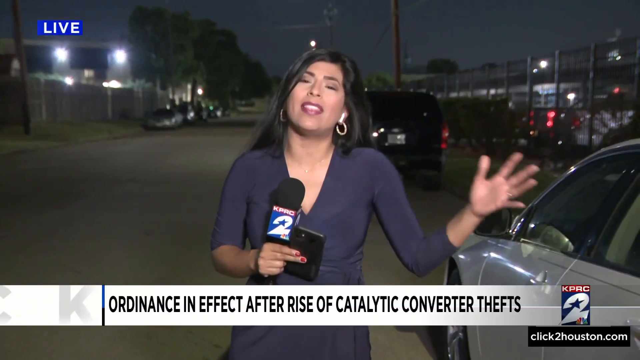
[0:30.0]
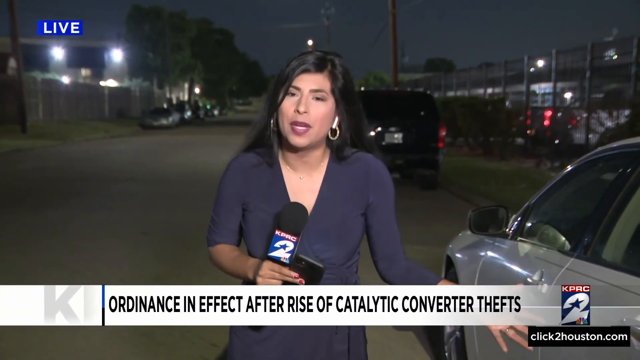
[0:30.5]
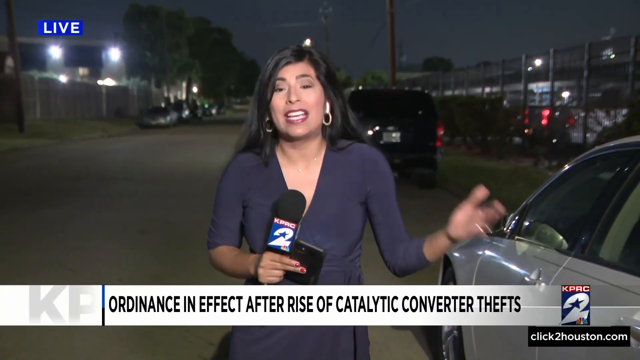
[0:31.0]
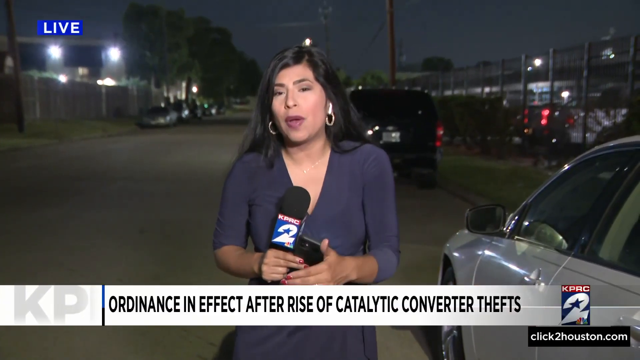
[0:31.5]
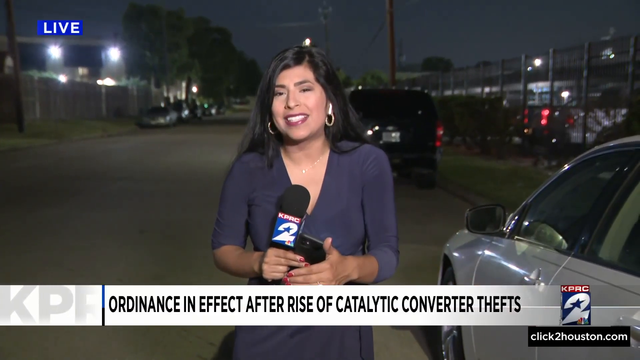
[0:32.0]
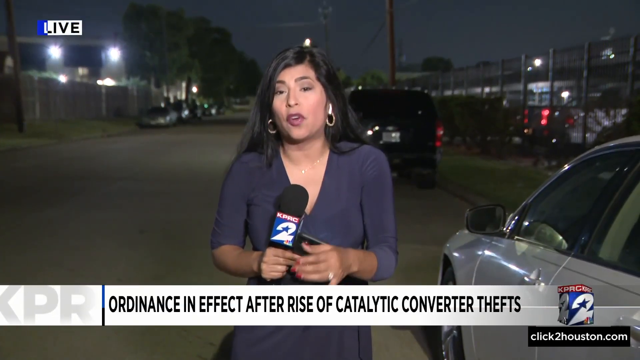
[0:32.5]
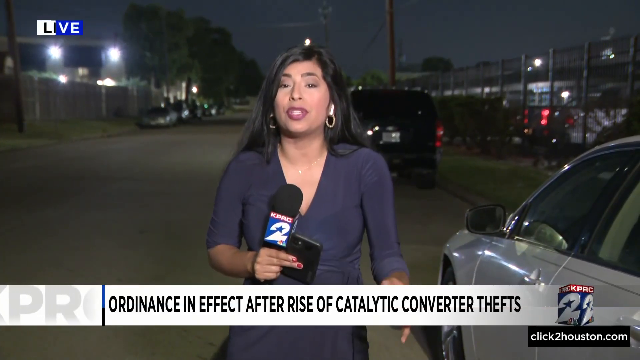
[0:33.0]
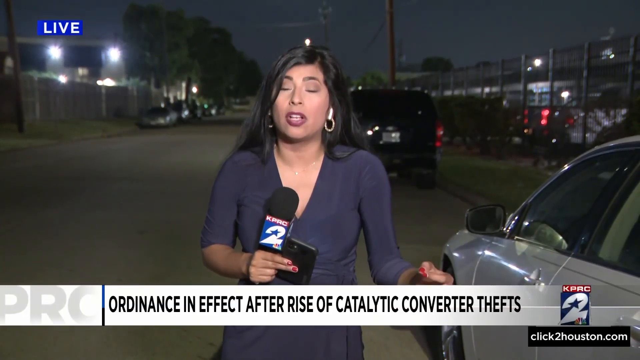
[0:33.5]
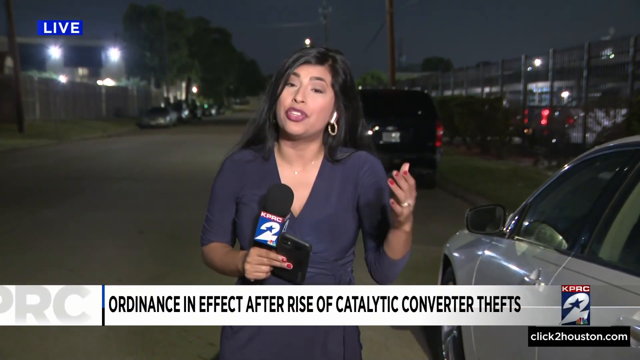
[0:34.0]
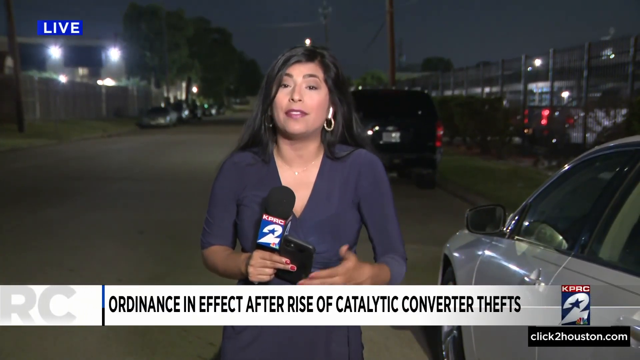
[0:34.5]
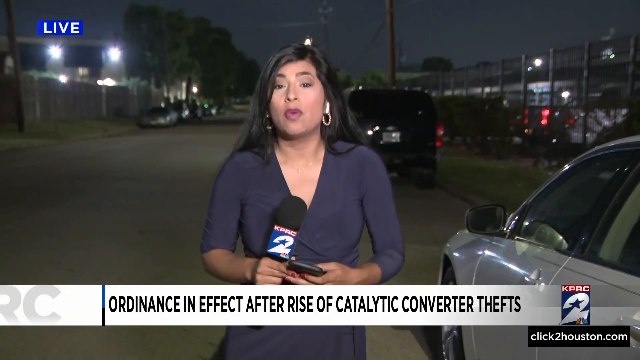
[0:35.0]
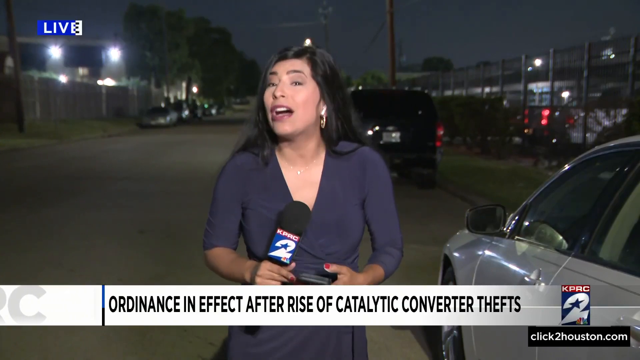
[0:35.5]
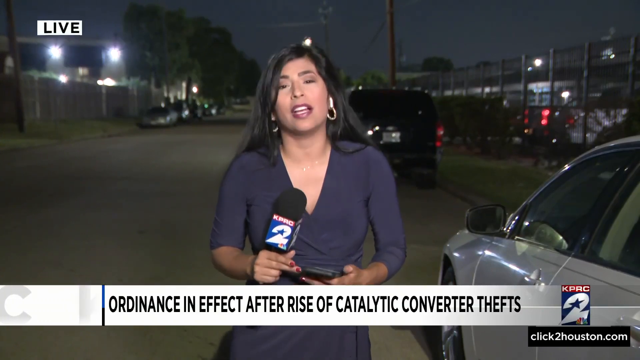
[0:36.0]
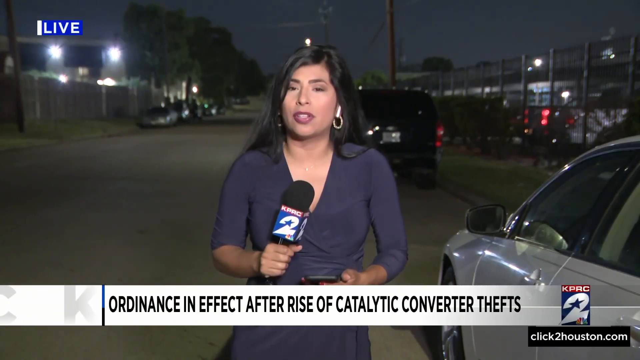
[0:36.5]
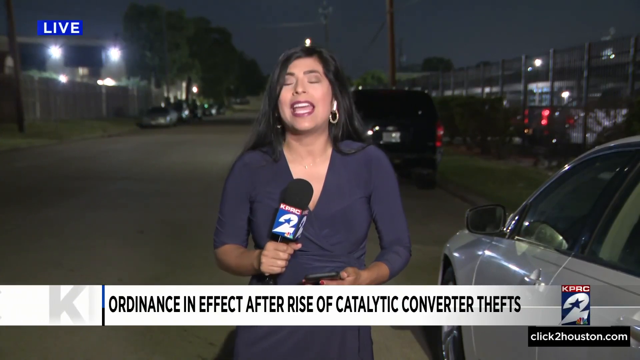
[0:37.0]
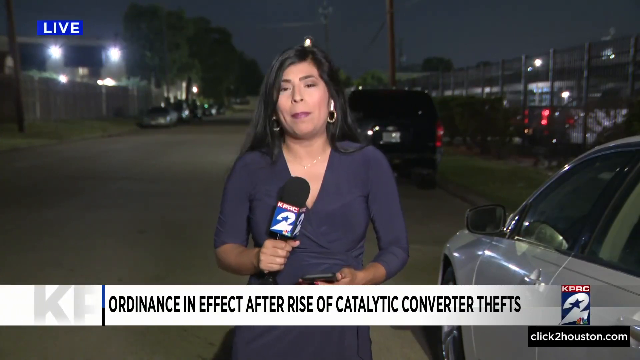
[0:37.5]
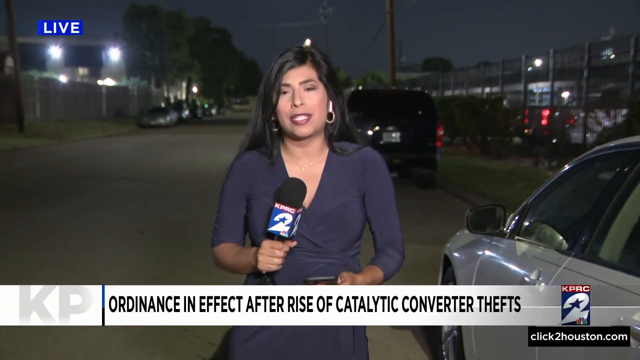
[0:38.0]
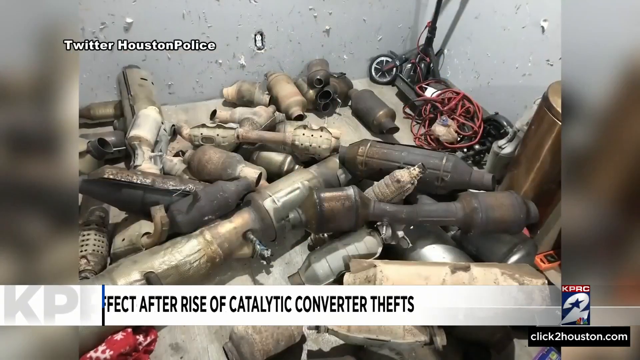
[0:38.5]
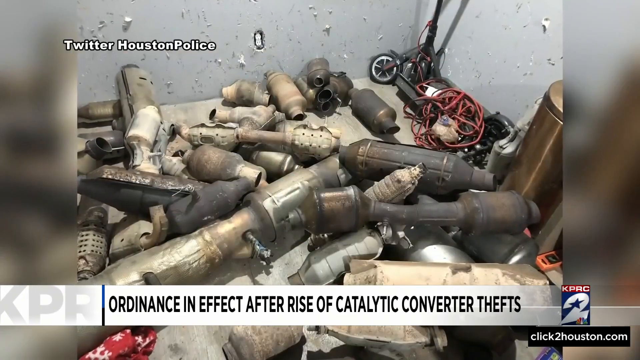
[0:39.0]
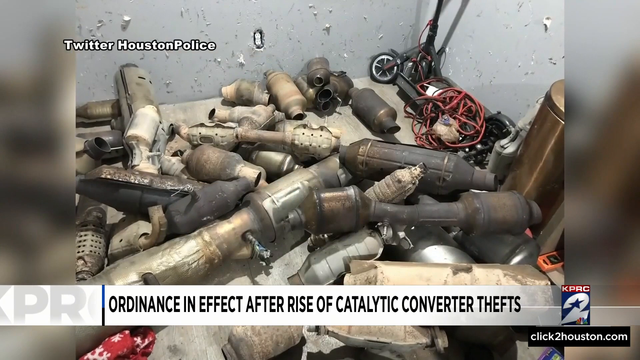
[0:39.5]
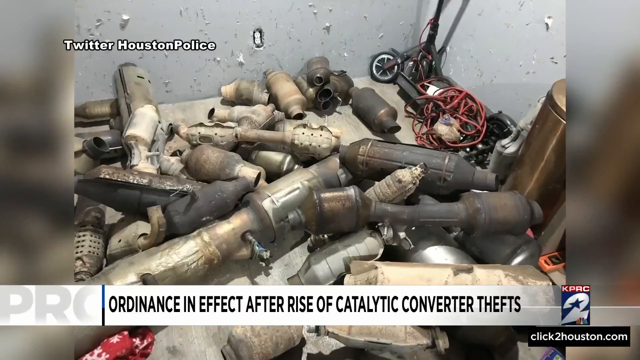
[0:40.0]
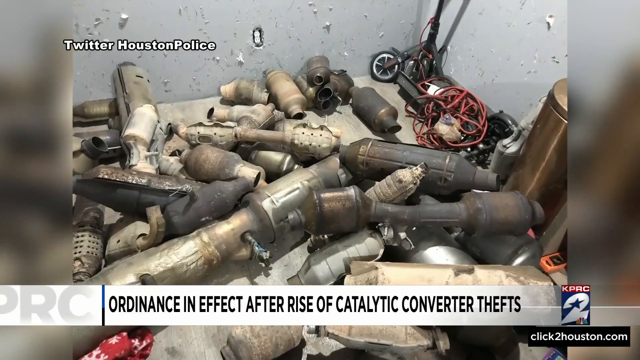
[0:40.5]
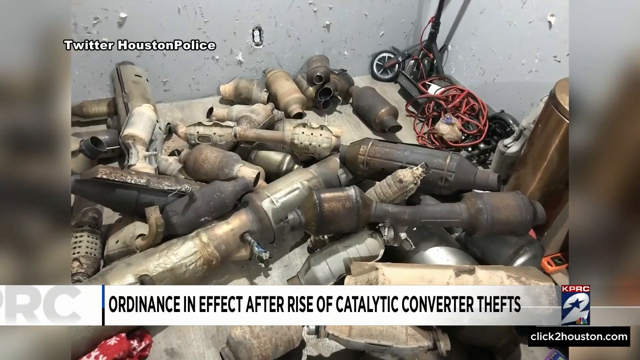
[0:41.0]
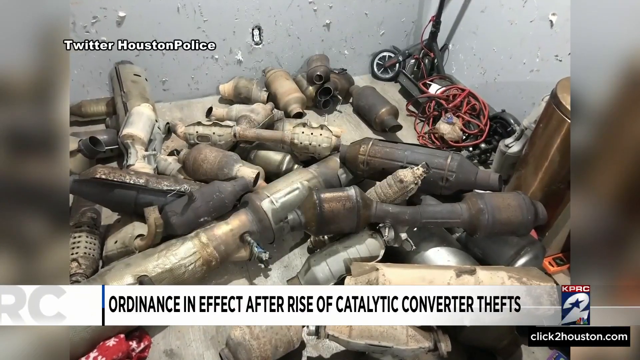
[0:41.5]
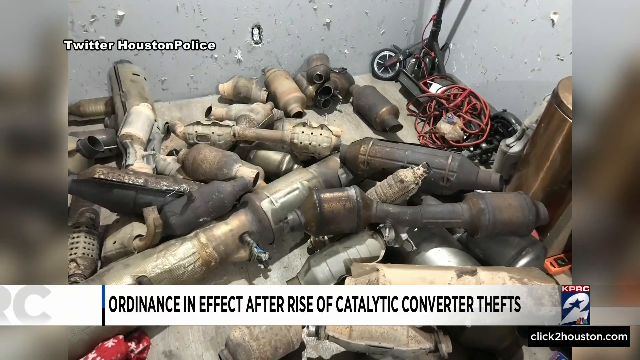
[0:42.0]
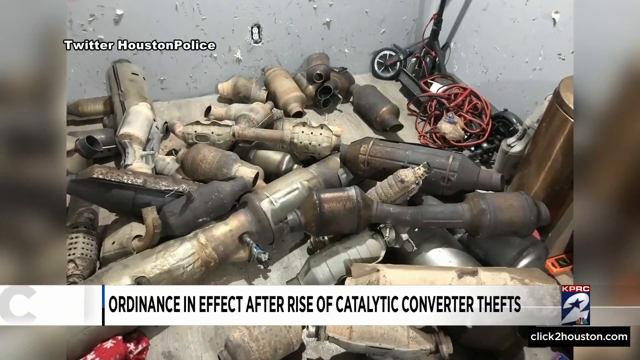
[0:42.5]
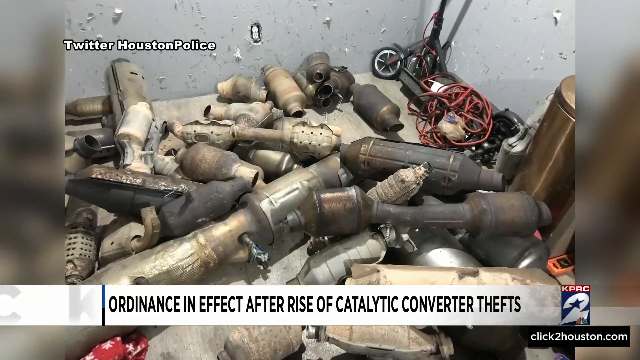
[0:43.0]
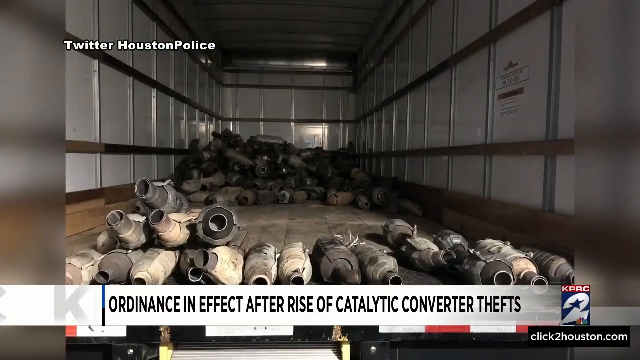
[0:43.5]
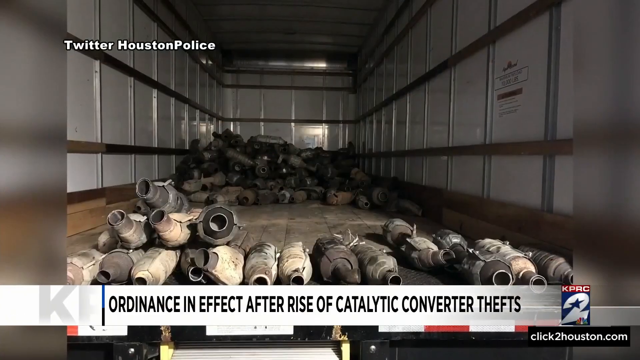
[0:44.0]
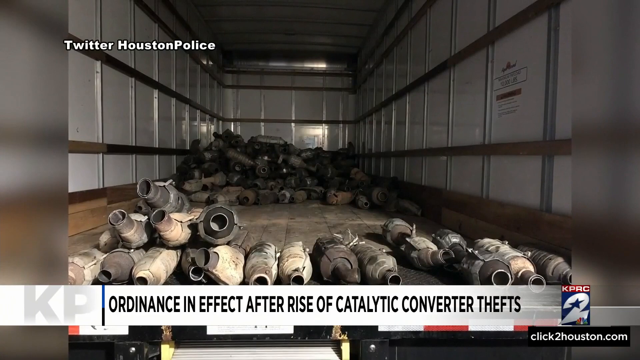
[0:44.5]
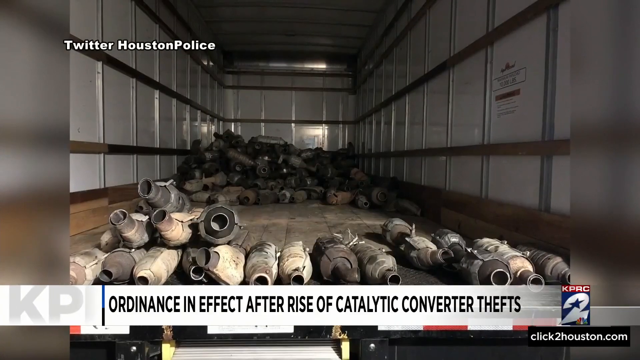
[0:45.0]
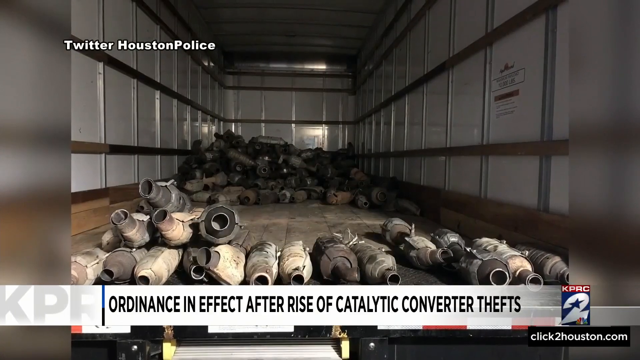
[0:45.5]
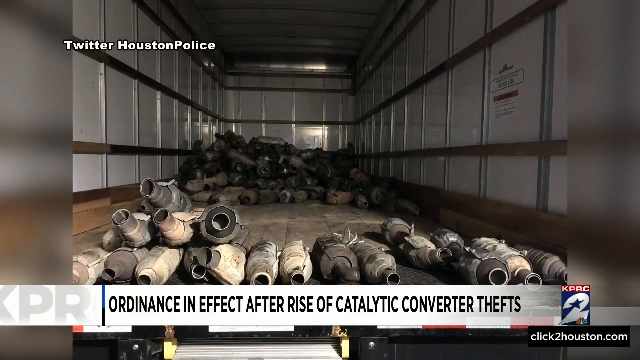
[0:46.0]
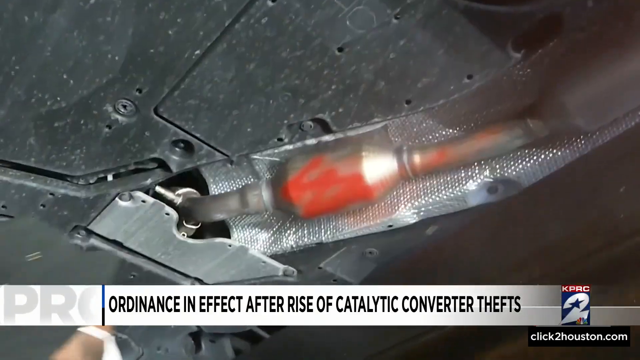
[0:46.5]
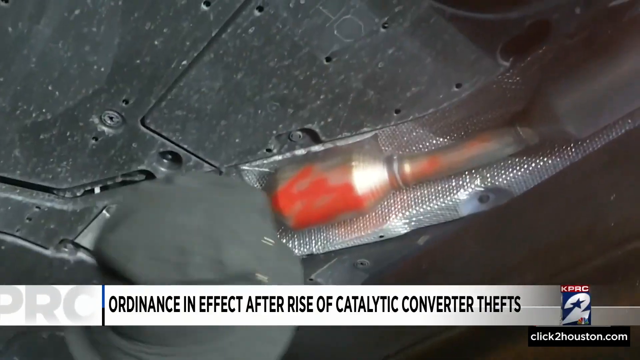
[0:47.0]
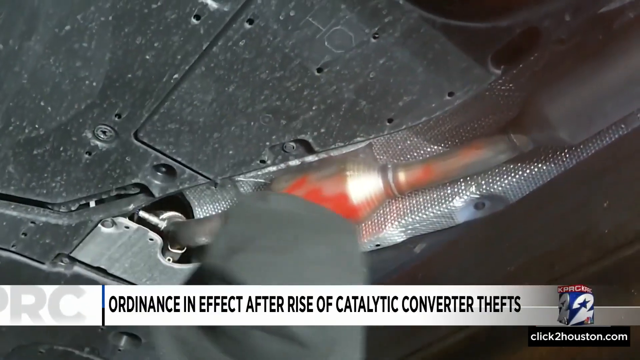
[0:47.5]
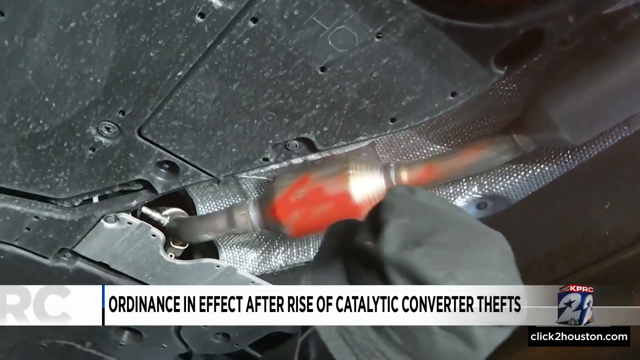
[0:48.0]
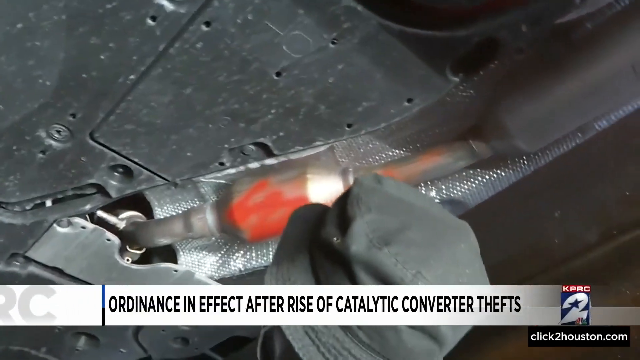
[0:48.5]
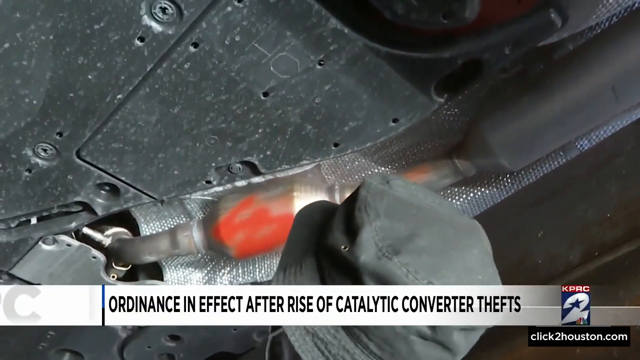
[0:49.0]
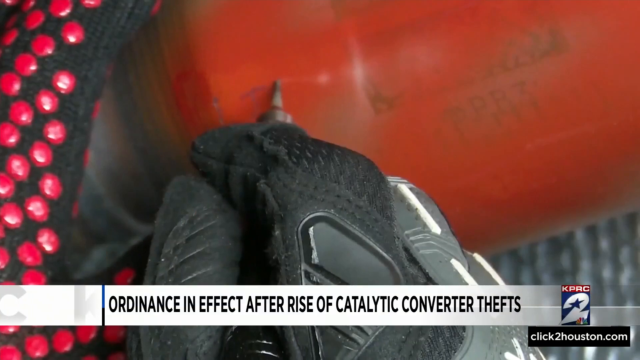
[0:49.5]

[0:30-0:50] "Live" appears on the top left. On the right is a fence with cars parked along the opposite end of it, in what looks like maybe an apartment complex. The reporter holds a phone in her hand as well as a microphone marked "KPRC-2". A picture then shows what looks like a lot of catalytic converters stacked one on top of the other in piles, with "Twitter, Houston Police" on the top left. They are inside what looks like a tractor trailer that is mostly empty except for the two piles of catalytic converters. Next, a mechanic works beneath a car under a catalytic converter, which looks like it has been painted over.